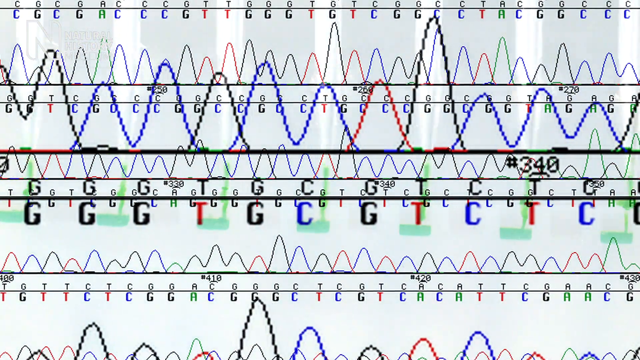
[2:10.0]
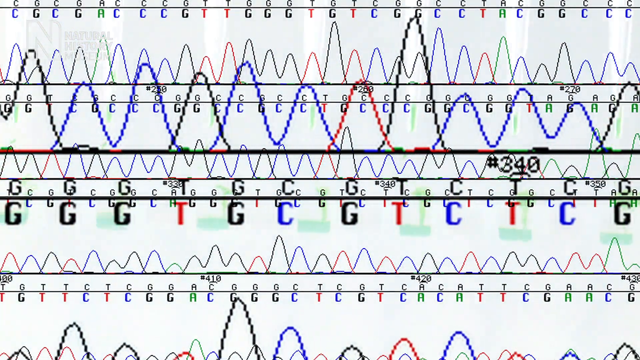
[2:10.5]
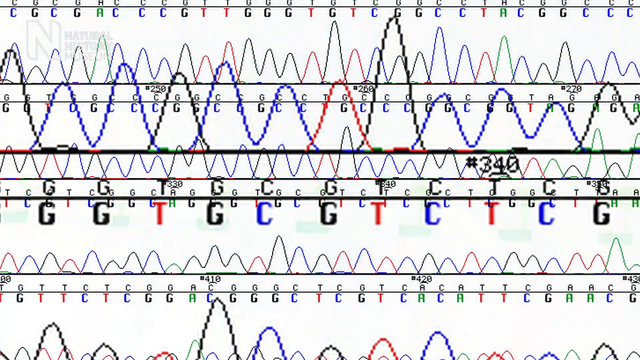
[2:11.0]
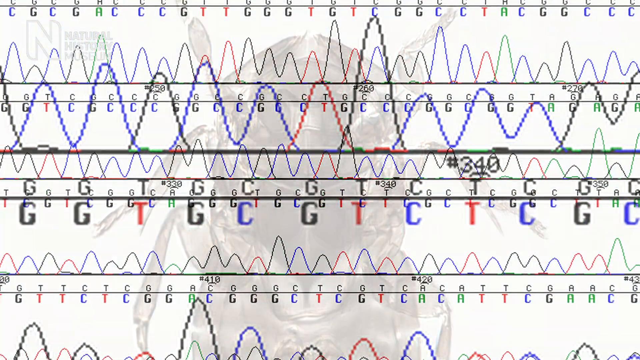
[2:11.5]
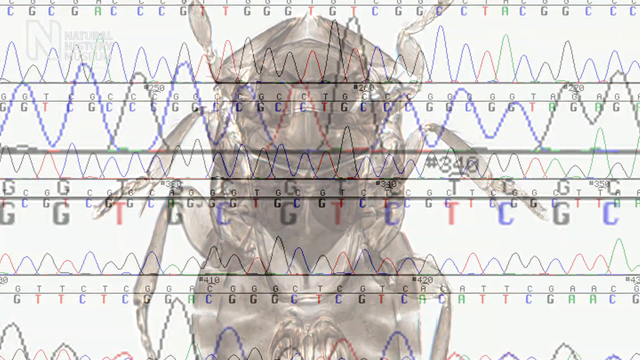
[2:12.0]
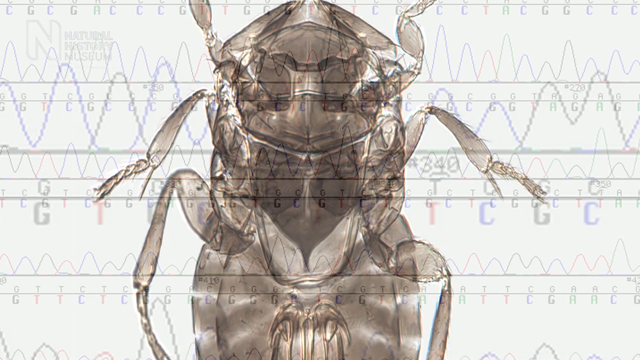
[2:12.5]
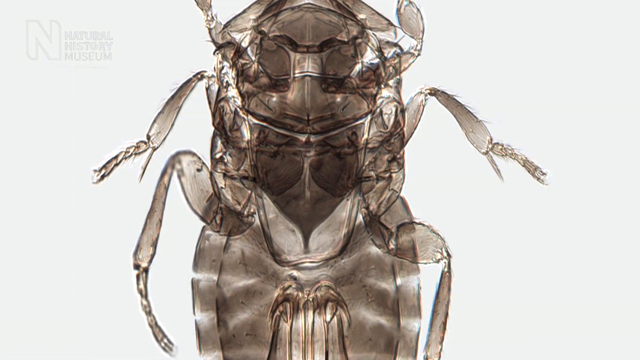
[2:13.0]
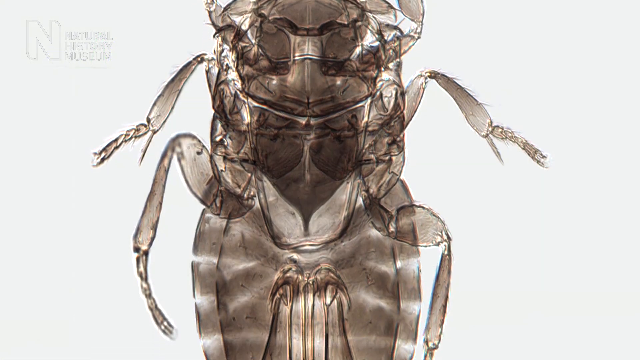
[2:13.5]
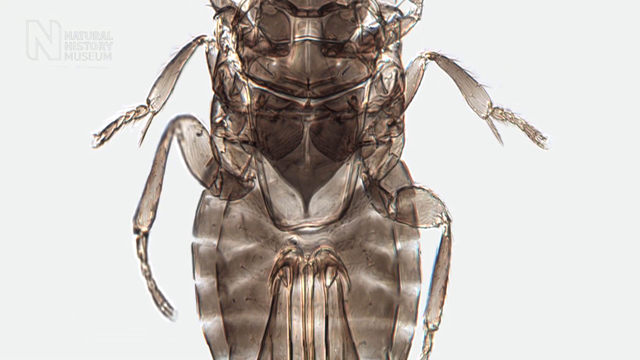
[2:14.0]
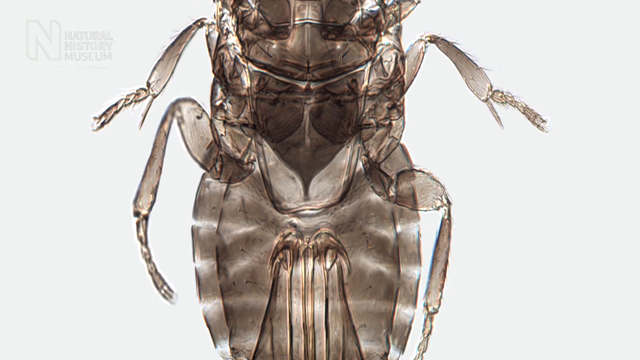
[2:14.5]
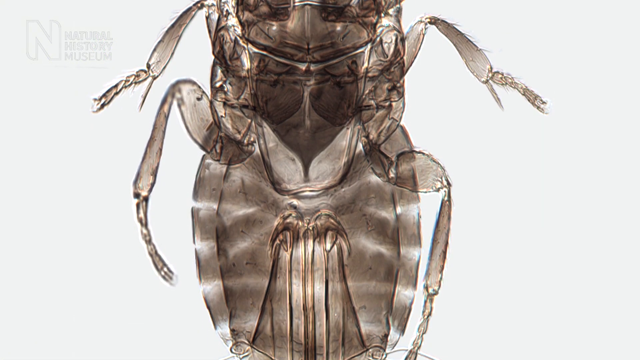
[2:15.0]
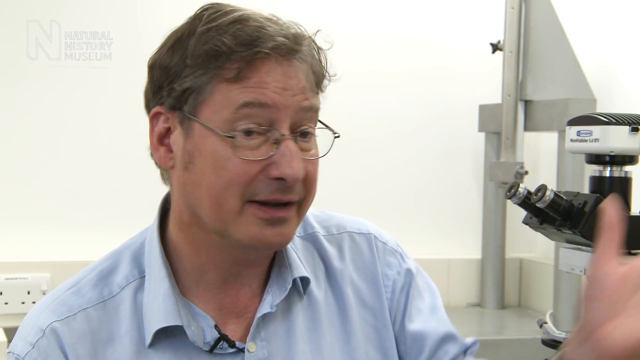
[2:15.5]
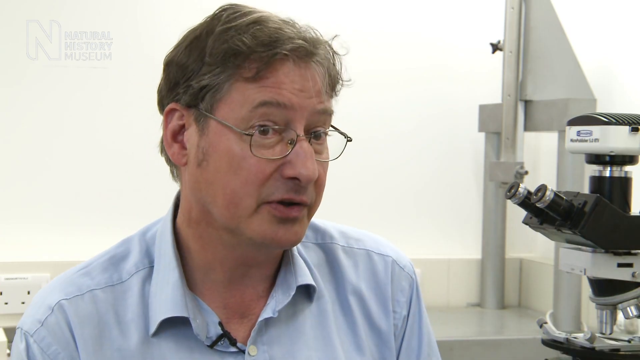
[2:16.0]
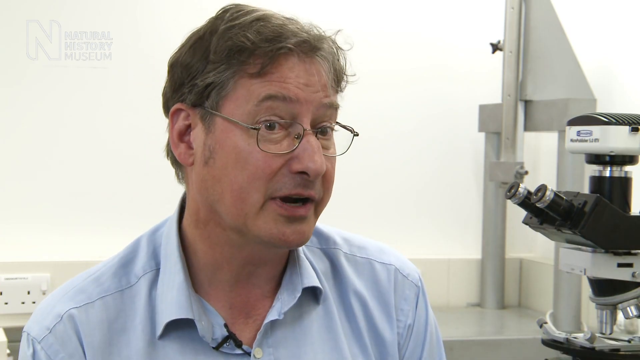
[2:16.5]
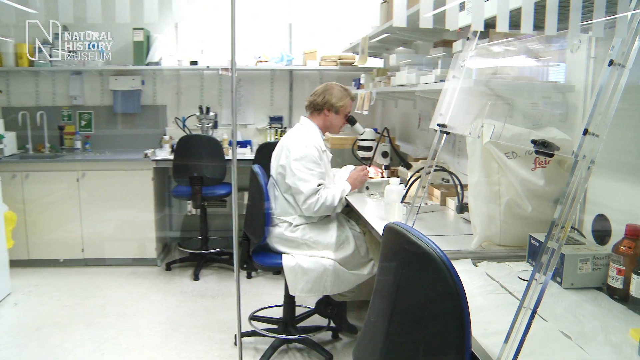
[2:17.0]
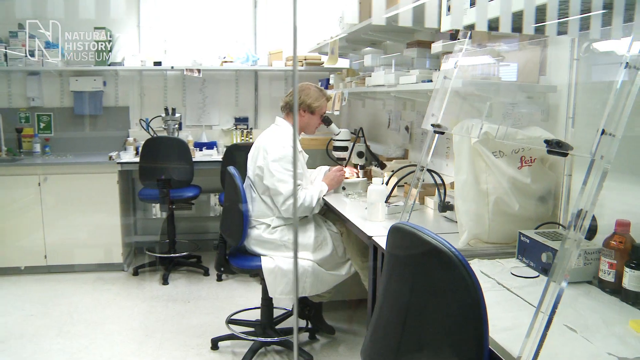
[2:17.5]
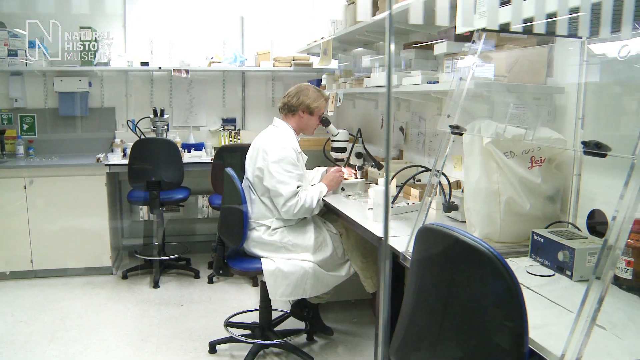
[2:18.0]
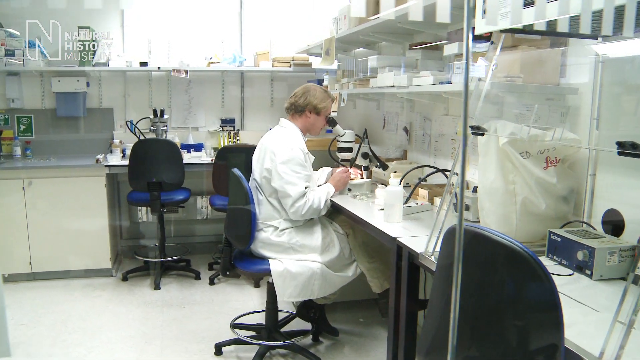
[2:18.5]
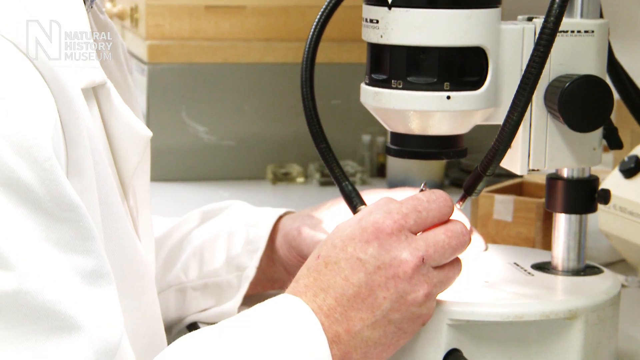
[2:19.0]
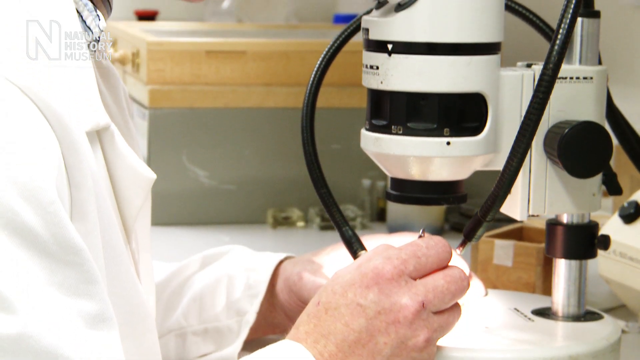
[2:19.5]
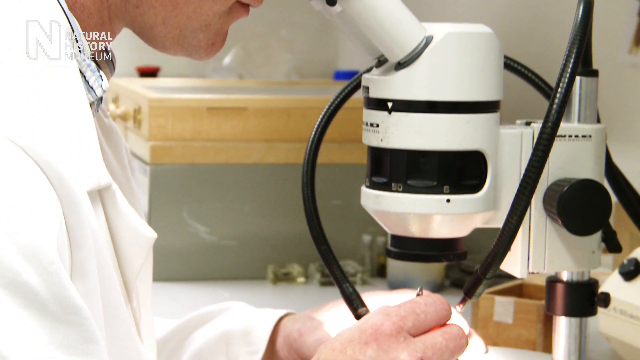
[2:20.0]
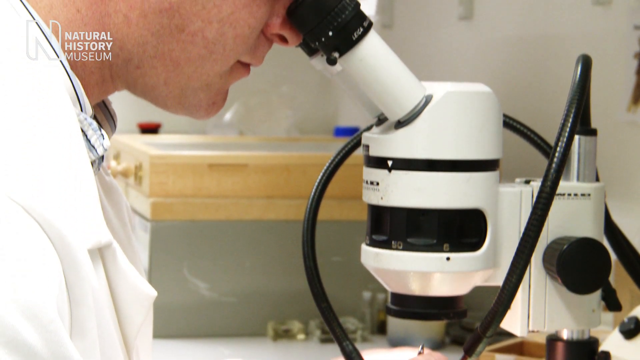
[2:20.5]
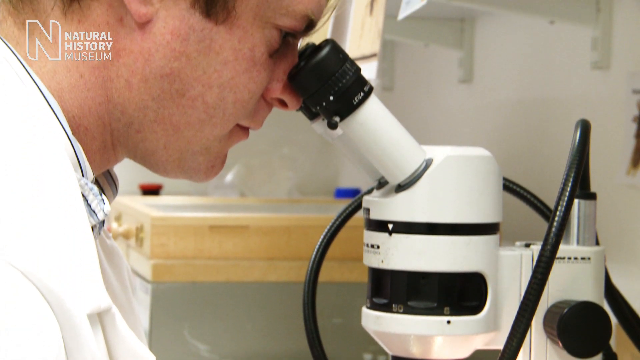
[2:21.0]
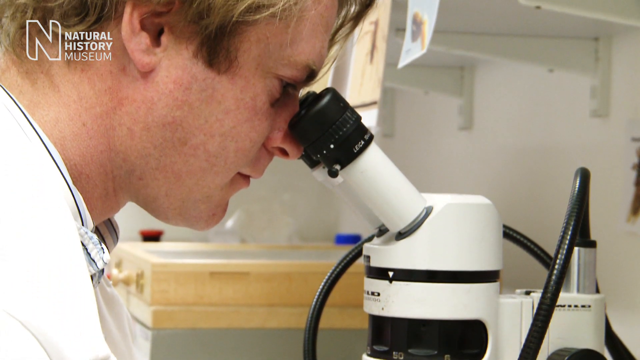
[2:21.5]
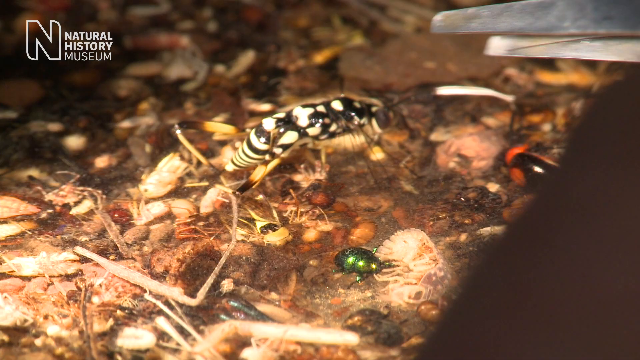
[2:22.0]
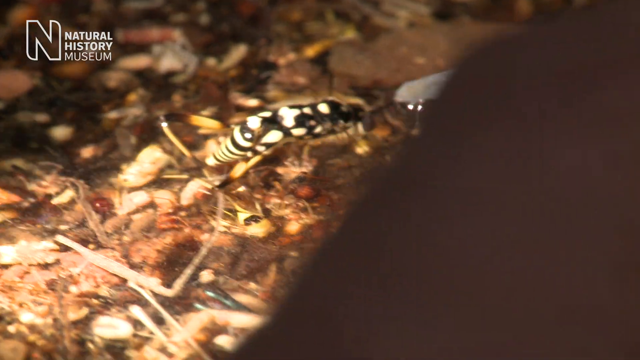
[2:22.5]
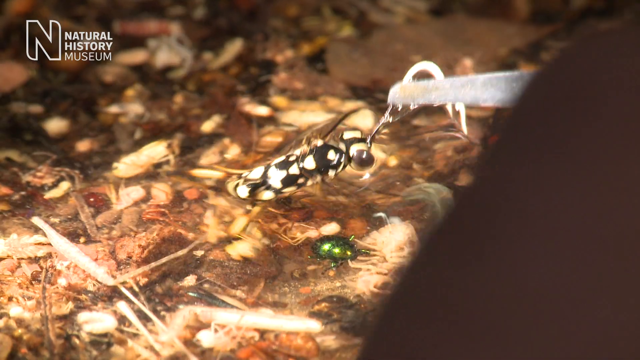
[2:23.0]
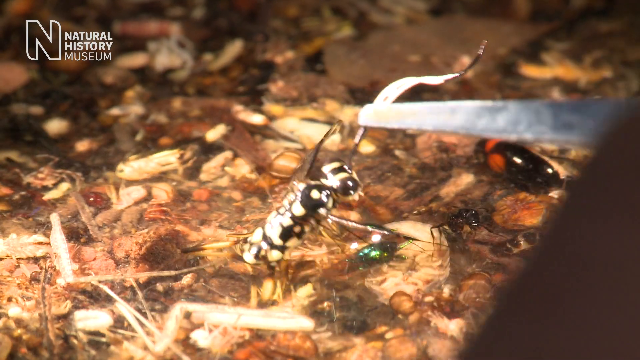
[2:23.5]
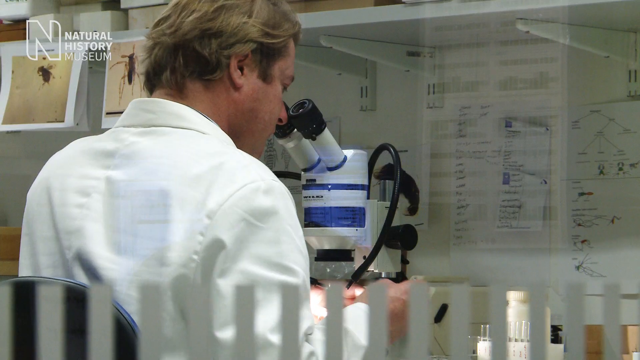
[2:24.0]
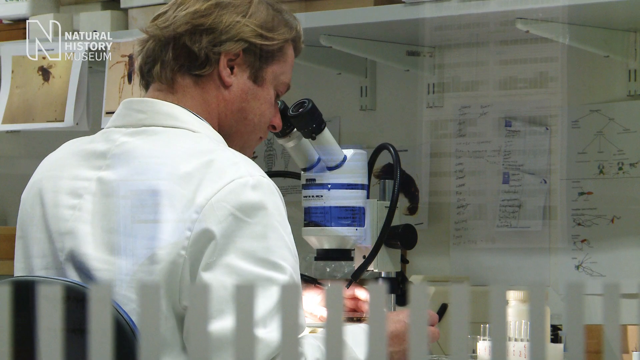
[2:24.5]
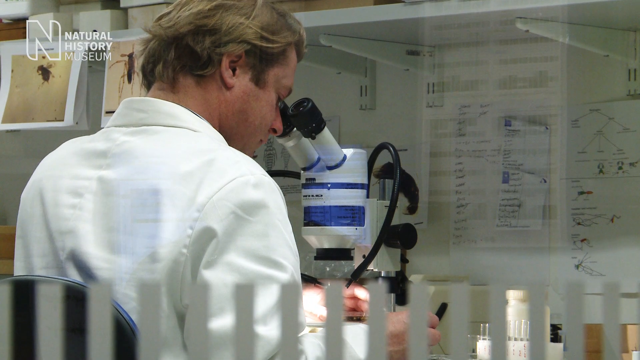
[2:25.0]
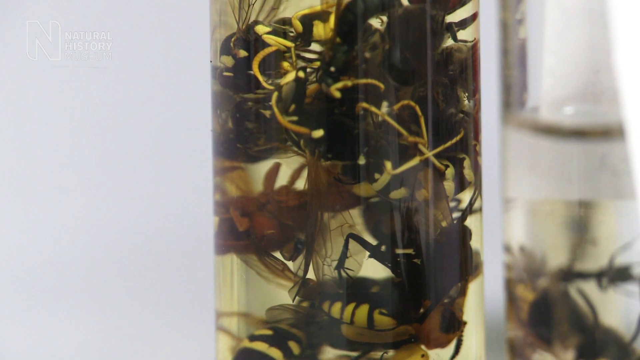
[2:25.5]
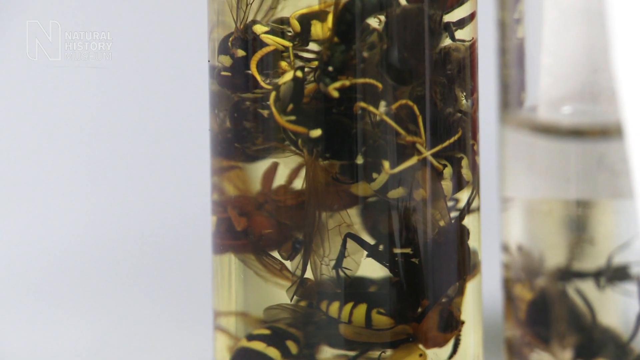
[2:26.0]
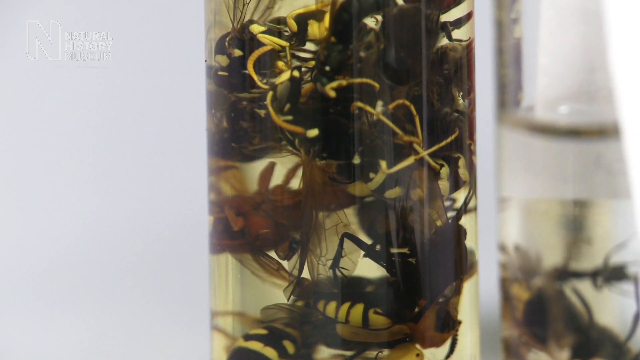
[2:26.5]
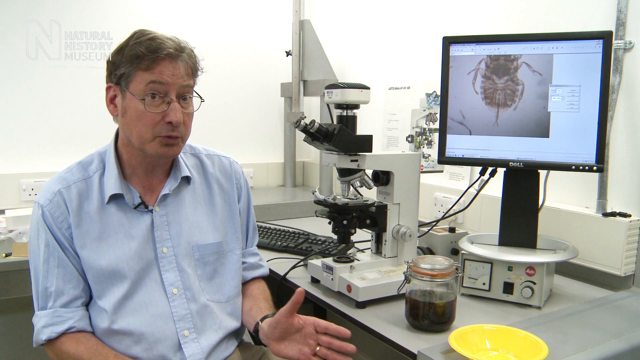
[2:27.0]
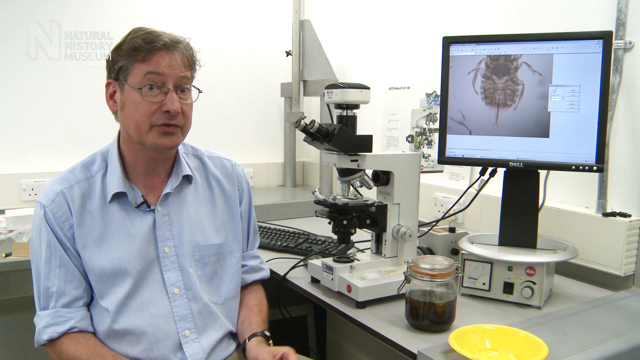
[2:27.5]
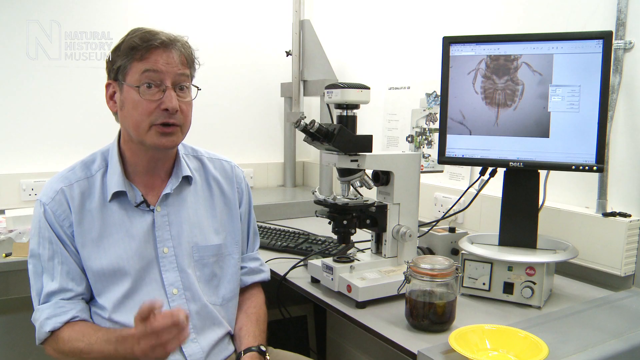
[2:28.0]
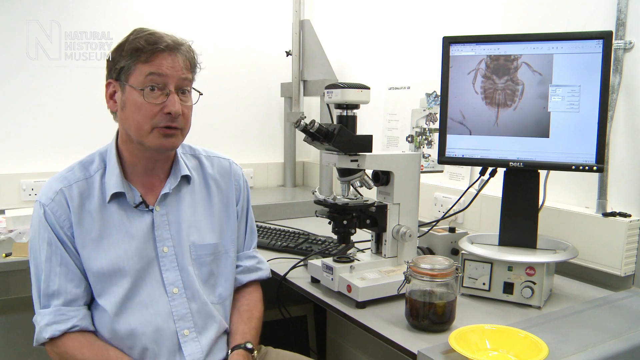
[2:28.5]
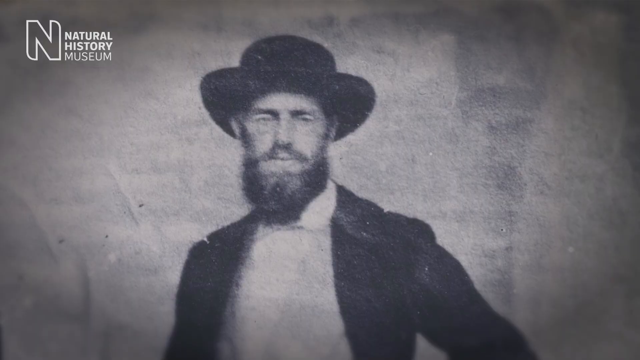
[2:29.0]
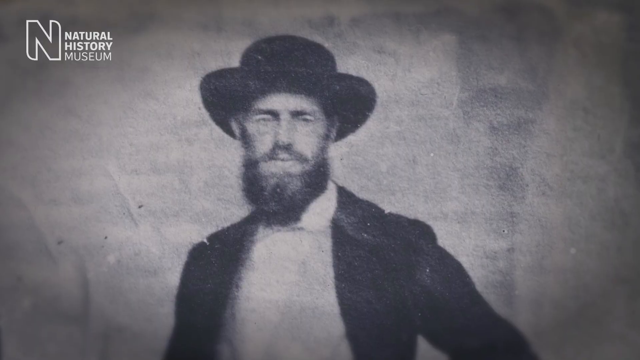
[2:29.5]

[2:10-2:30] The printout is shown over a background of green, blue and black wave-like lines, with the main part of a different printout seeming to move across from right to left with the G, C and T letters on the waves. A detailed close-up then moves gradually from the top of an insect down through each part to the bottom. Dr. Petrasca talks to somebody towards the right of the camera. The video then cuts to the volunteer in a laboratory with at least three blue chairs plus the one he sits on. The camera, maybe starting from the left-hand side, gradually turns towards the volunteer, who looks through a microscope on a bench with a number of other pieces of equipment. The view moves to the volunteer's chest area and his hands, which are dealing with something under the microscope, perhaps a petri dish, and the camera gradually pans up to his face as he looks down into the microscope. Then comes perhaps what he is looking at: tweezers on the right-hand side of the picture pick out what looks like a much bigger insect, black and white spotted, apparently by its antenna, from a black sludge with lots of other artifacts and a green artifact. The camera then looks towards the back of the gentleman as he lifts his eyes from the microscope, moving ever so slightly in and out. Next is some sort of cylinder-type jar with perhaps a number of different insects in it, then Dr. Prochaska talking, and then a static picture of a gentleman, perhaps from the 1800s, with a black hat and a beard.